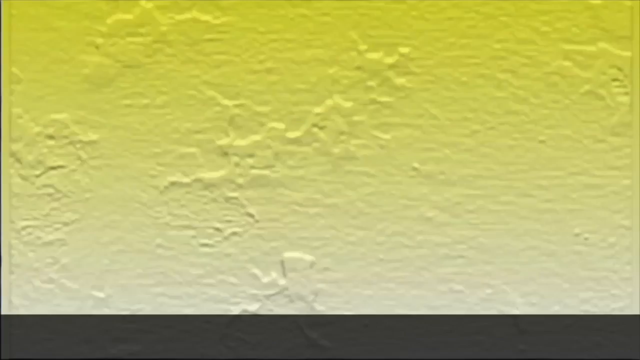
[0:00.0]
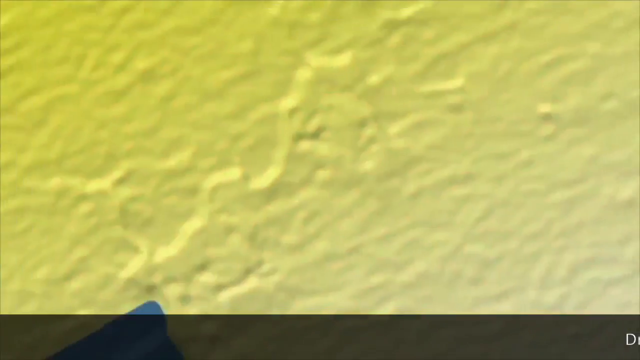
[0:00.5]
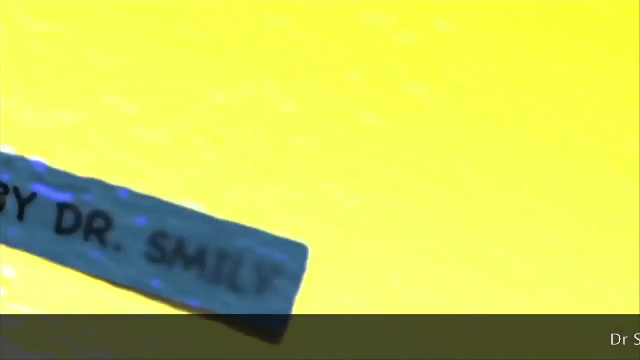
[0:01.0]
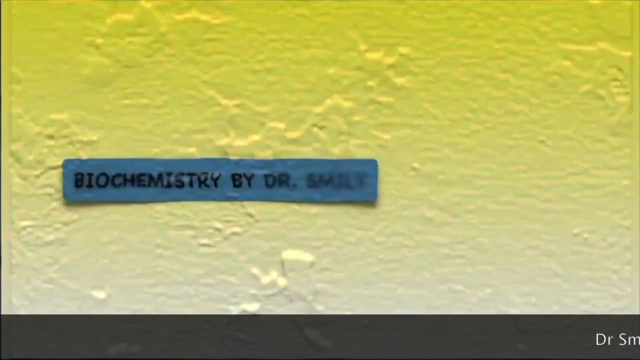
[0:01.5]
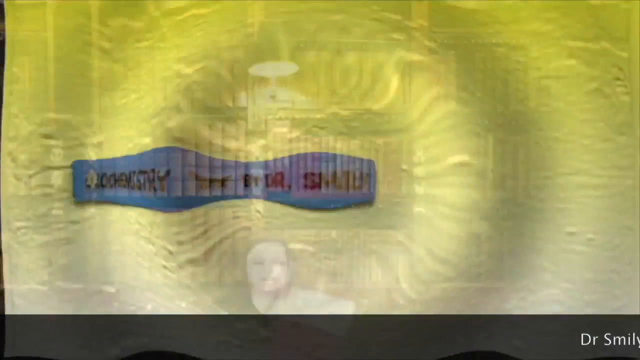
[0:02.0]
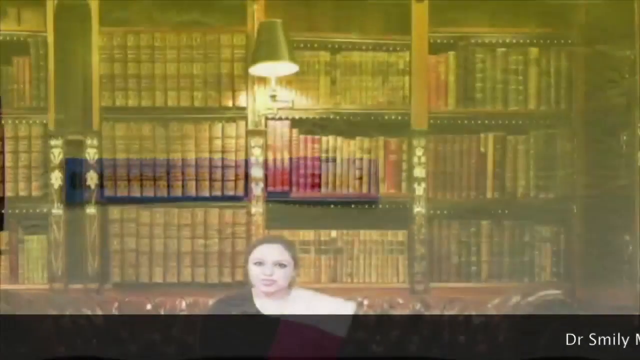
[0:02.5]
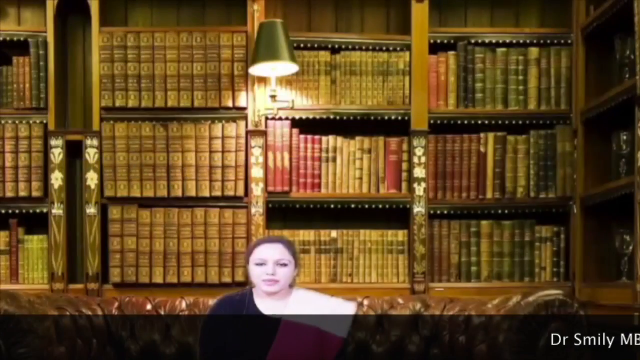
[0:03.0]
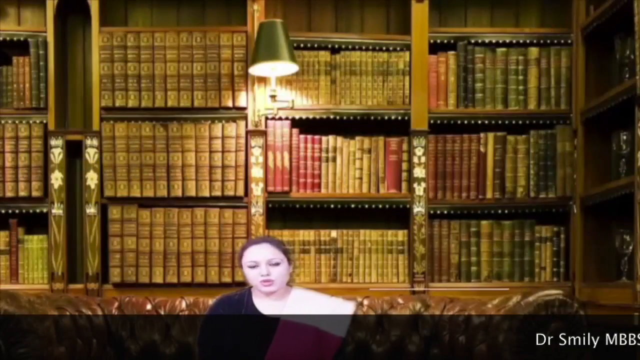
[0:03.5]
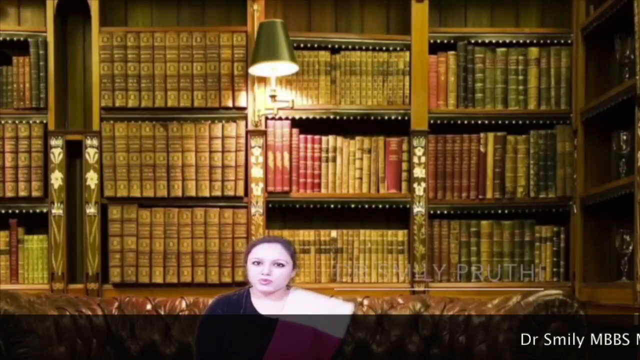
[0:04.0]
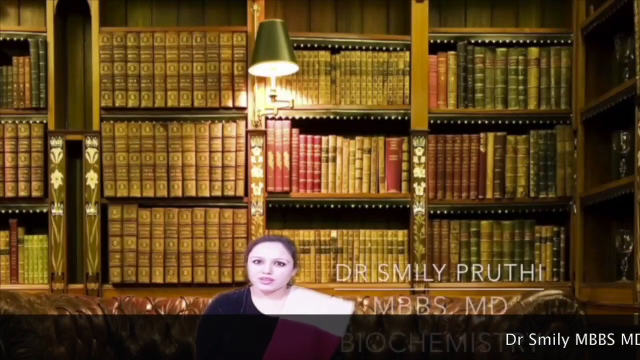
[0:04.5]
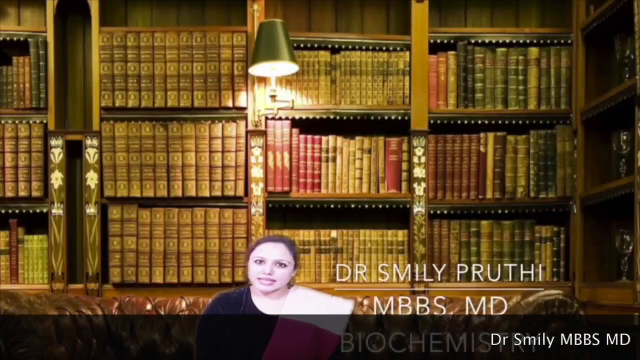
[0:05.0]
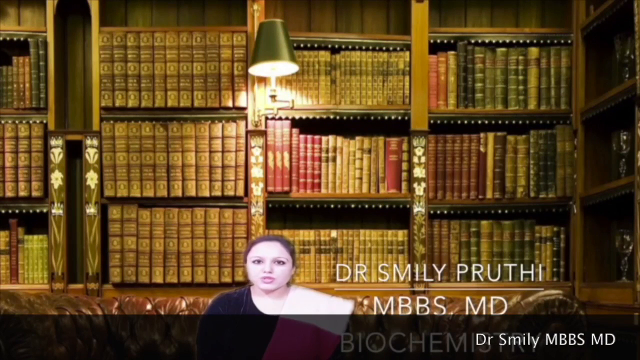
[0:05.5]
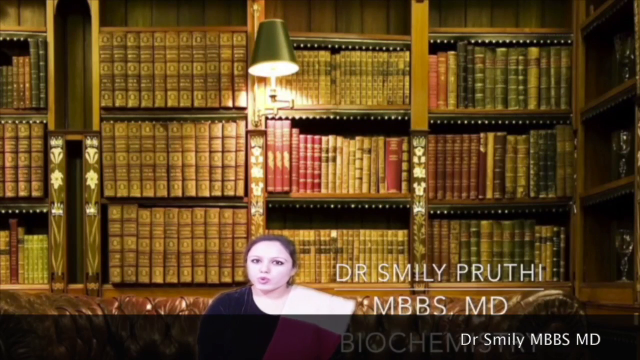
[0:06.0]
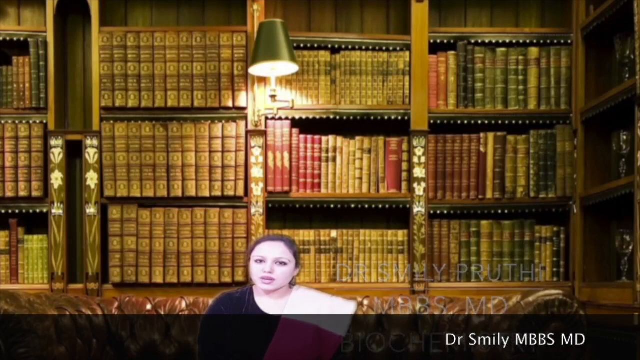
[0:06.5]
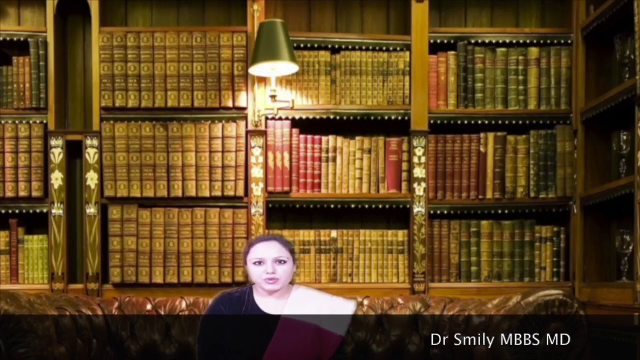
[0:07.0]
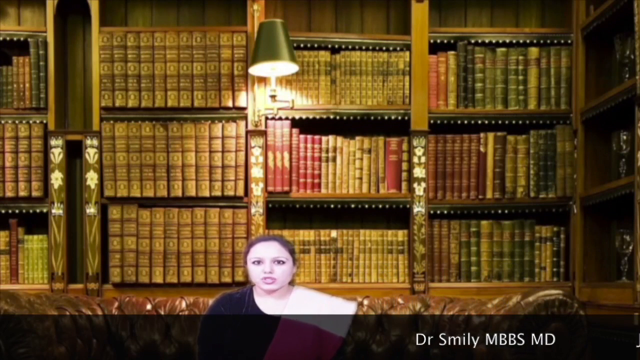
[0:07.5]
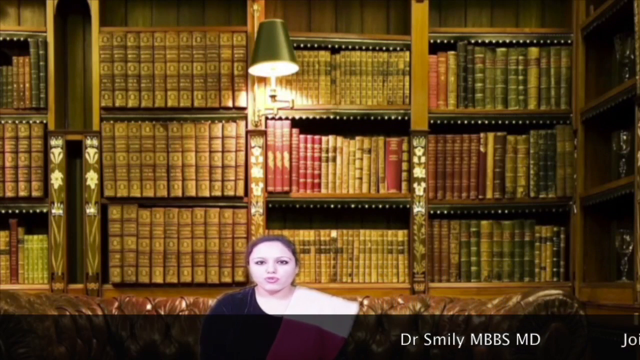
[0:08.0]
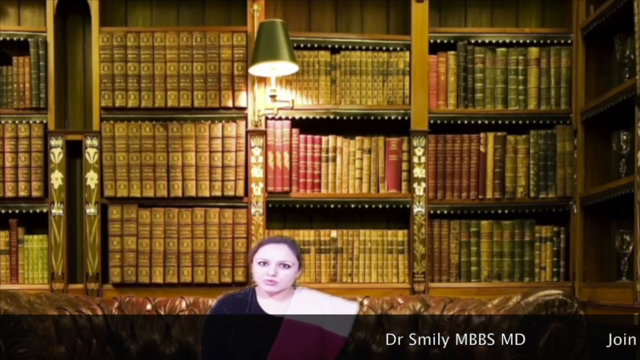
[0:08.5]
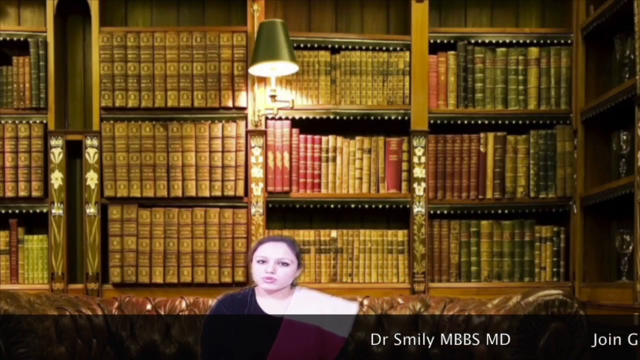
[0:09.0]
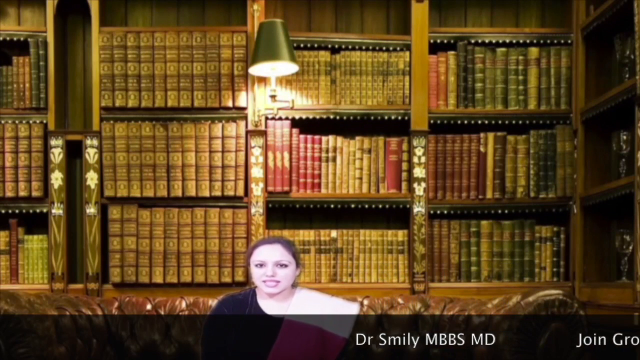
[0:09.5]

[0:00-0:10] A yellow-tinted, close-up image of what looks like a section of wall appears first. The image quickly jumps around and turns into a woman sitting in front of a library background that looks to be a green screen. She is sitting on a large leather sofa with large books behind her on the wall, which seem very out of proportion in size. Text across the bottom includes "Dr. Smiley" and "MBBS". Then the scene changes back.